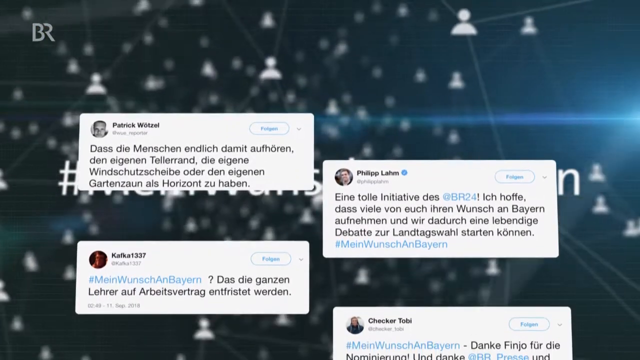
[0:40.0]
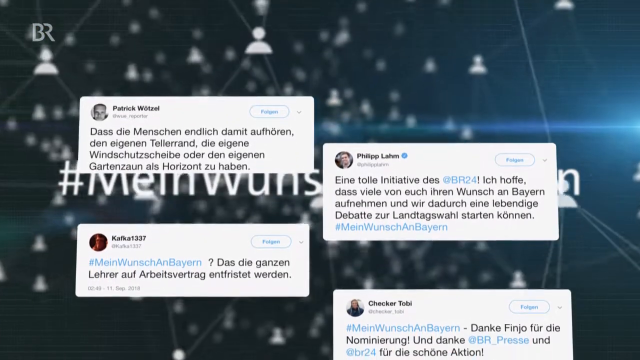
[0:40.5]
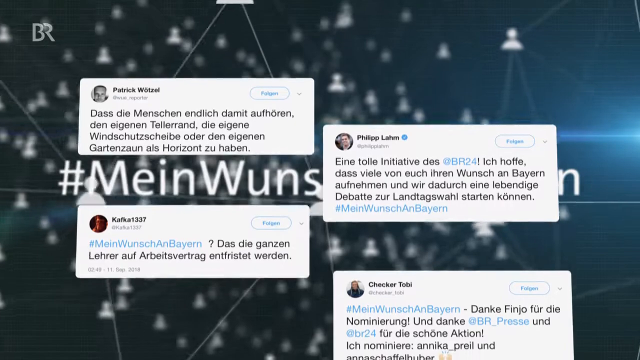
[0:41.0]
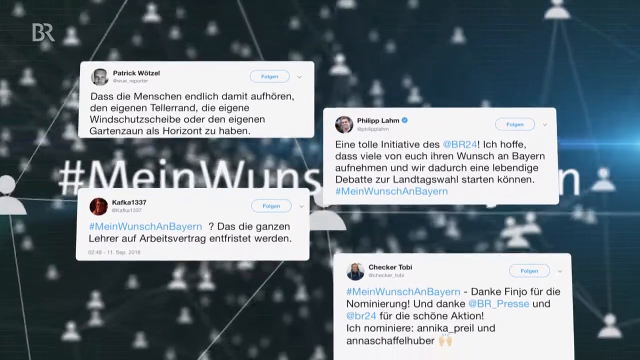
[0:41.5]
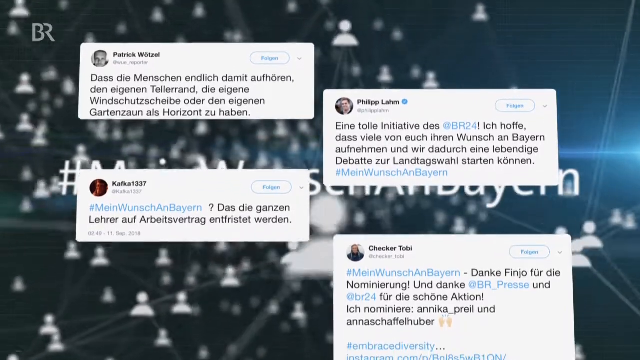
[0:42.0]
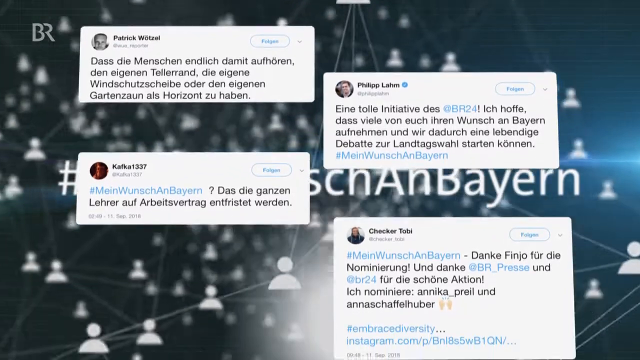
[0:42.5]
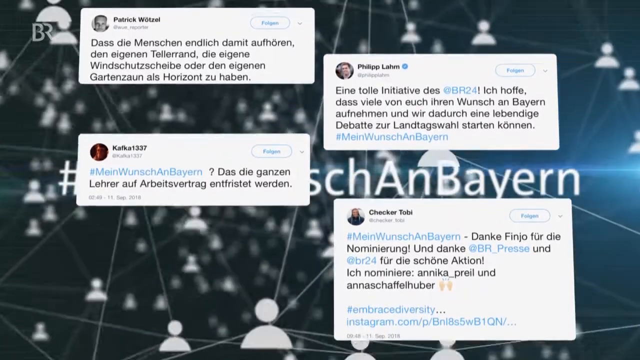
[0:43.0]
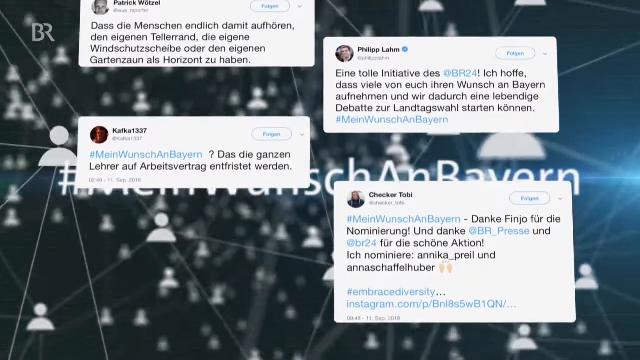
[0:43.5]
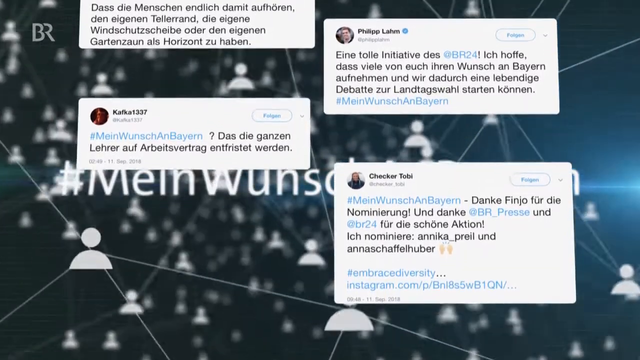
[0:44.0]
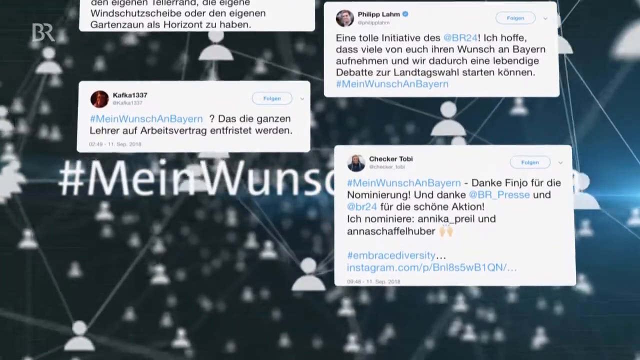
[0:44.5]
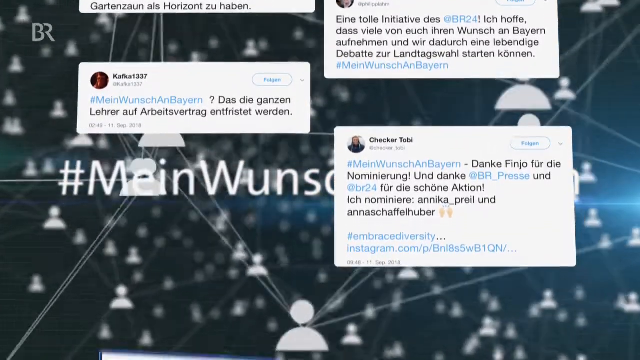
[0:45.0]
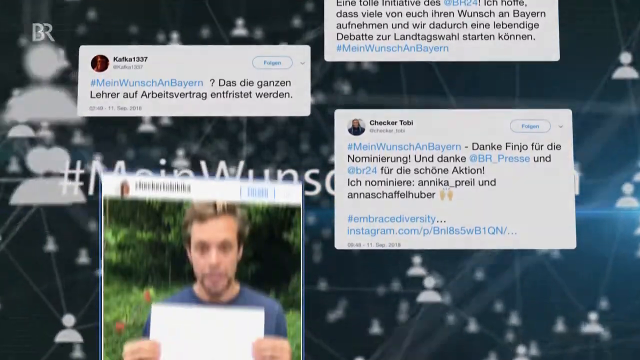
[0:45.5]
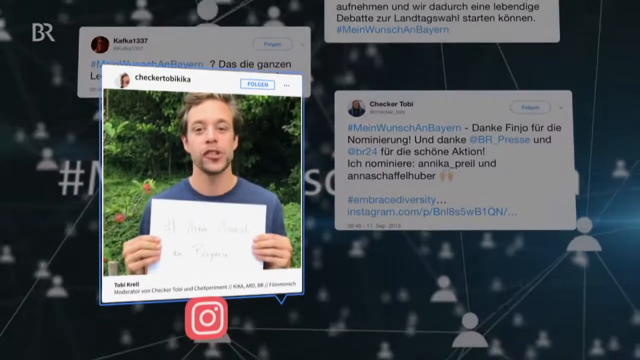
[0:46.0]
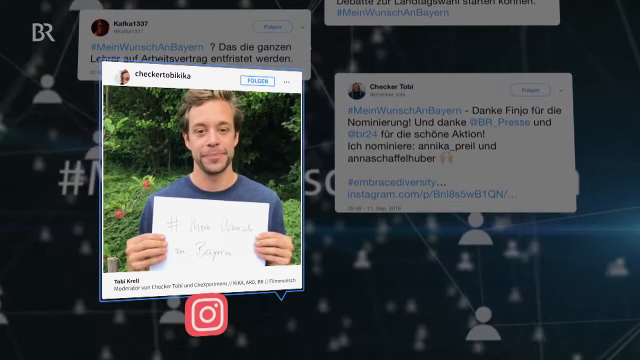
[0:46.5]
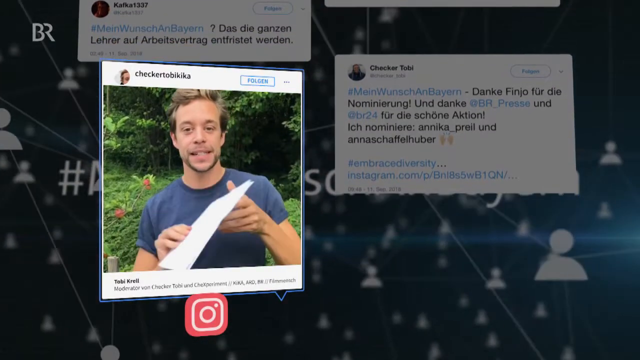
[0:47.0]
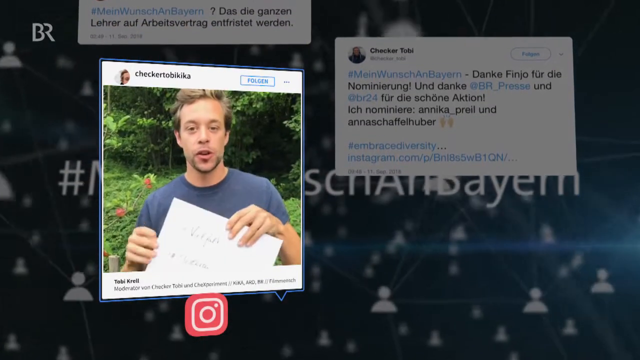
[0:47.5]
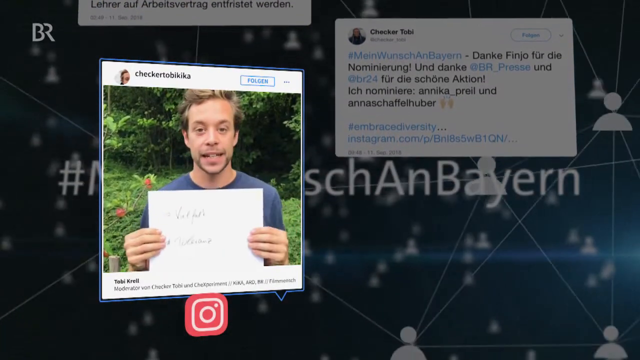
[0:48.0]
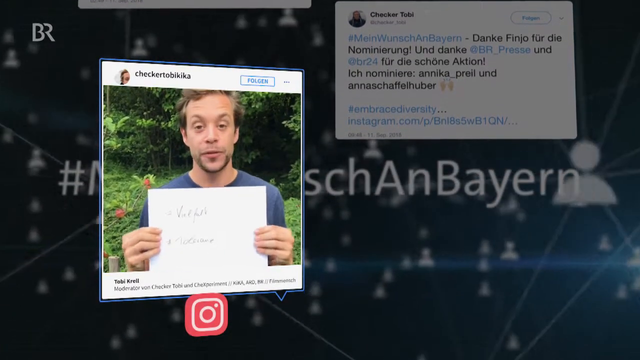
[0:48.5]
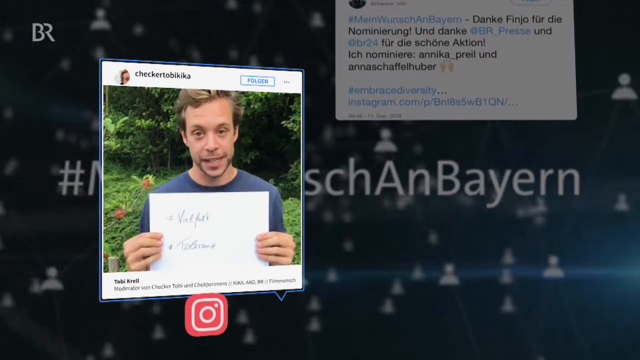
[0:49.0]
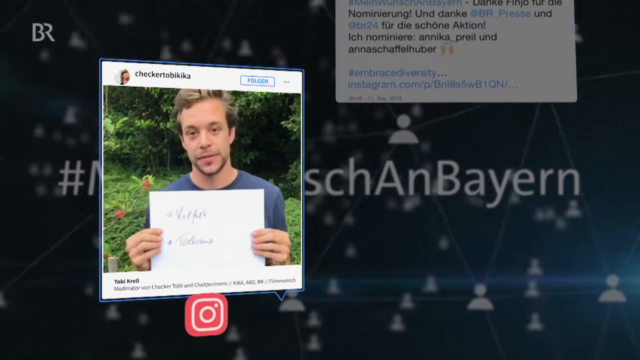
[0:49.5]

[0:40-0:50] The German-language video seems to be about Bavaria, looking possibly more like an ad than news. Tweets from different people move up from the bottom of the screen to the top. Another man is shown; he has just turned his paper over and is talking. He appears in a small inset screen inside another screen that has symbols of men and women with lines drawn between them, as though they have connections.